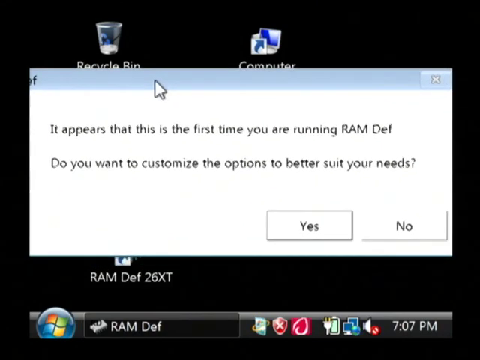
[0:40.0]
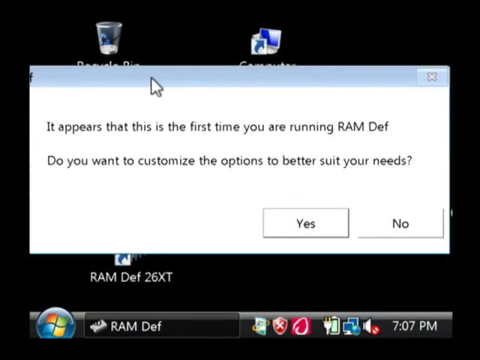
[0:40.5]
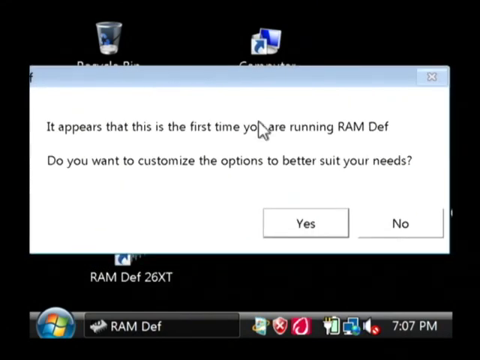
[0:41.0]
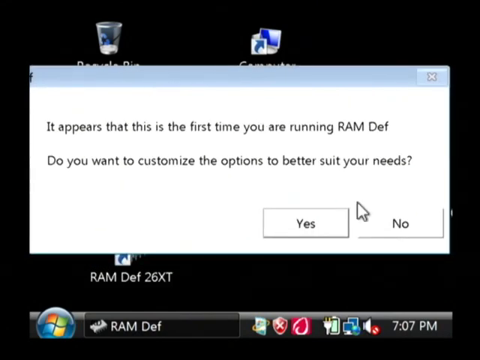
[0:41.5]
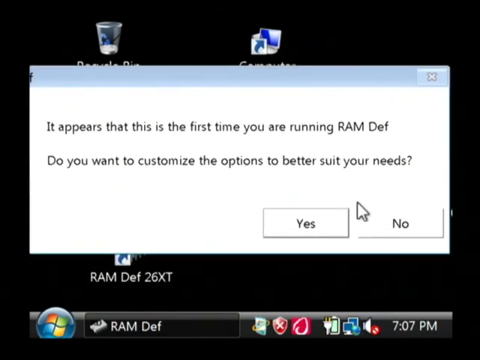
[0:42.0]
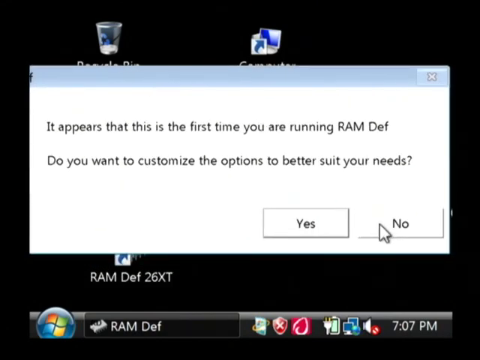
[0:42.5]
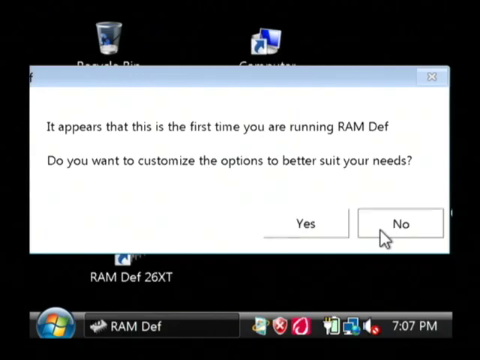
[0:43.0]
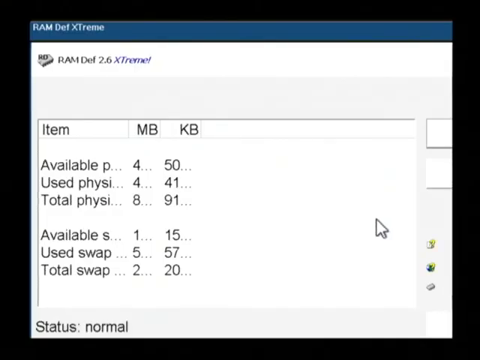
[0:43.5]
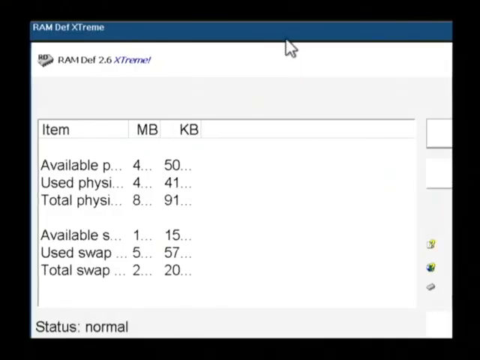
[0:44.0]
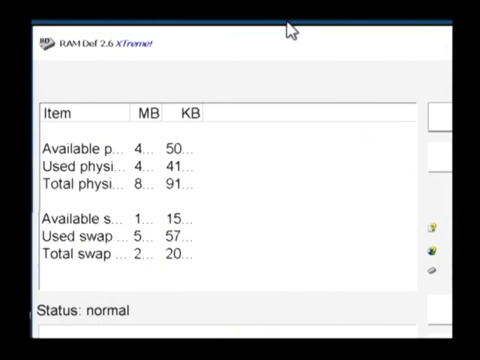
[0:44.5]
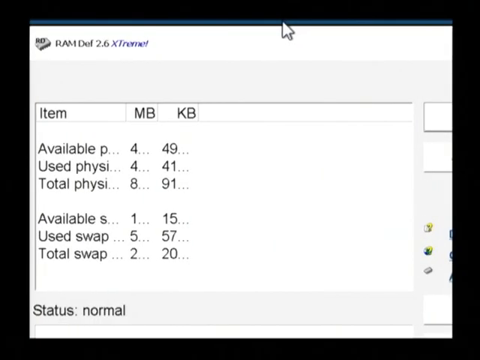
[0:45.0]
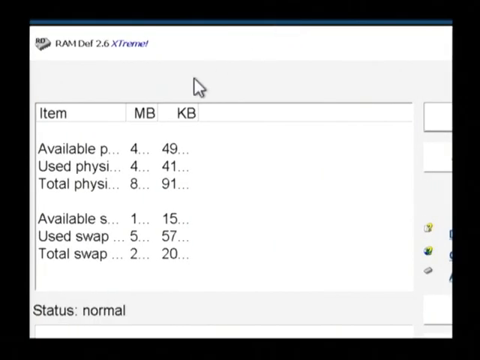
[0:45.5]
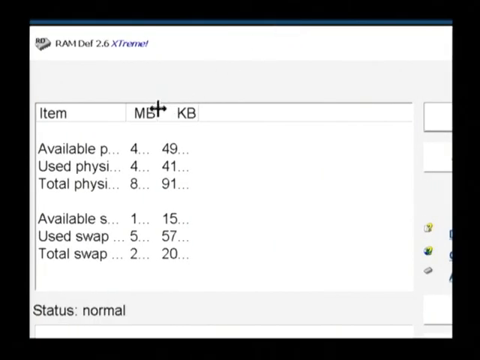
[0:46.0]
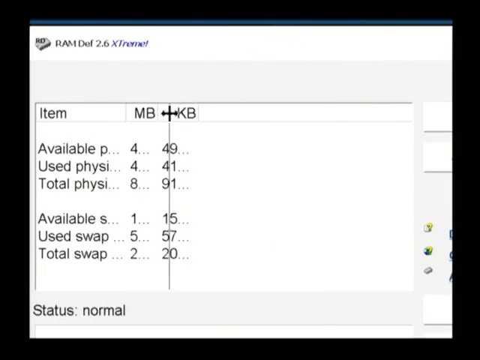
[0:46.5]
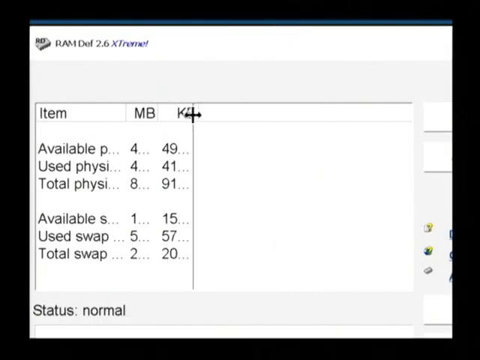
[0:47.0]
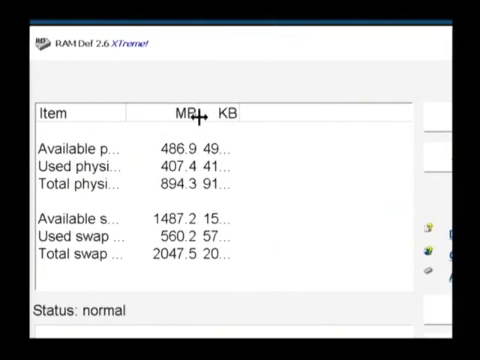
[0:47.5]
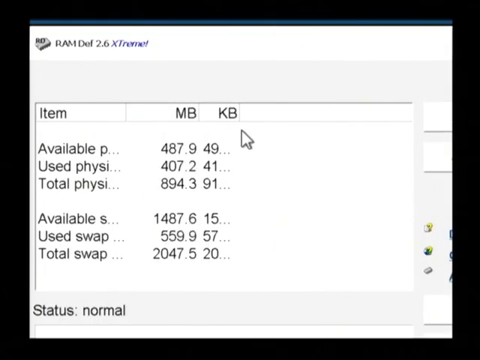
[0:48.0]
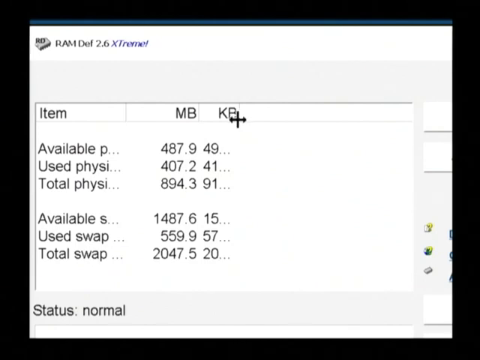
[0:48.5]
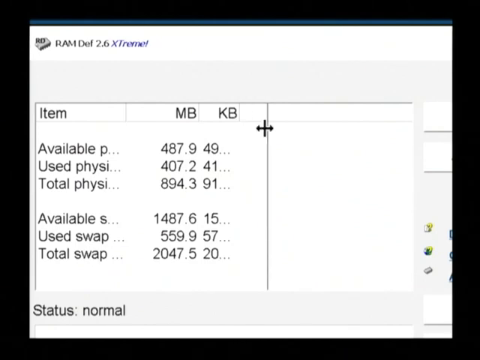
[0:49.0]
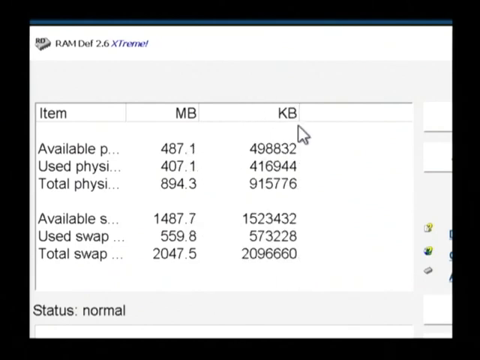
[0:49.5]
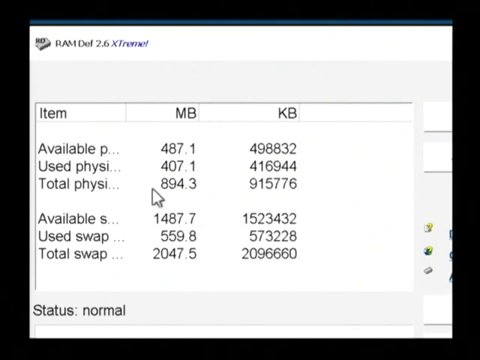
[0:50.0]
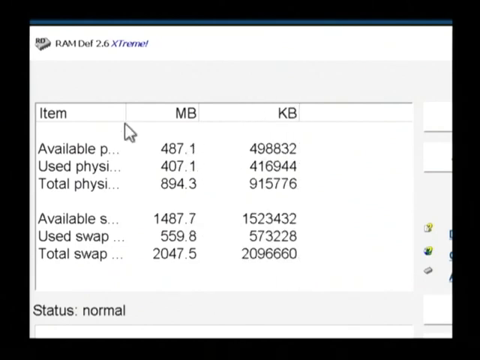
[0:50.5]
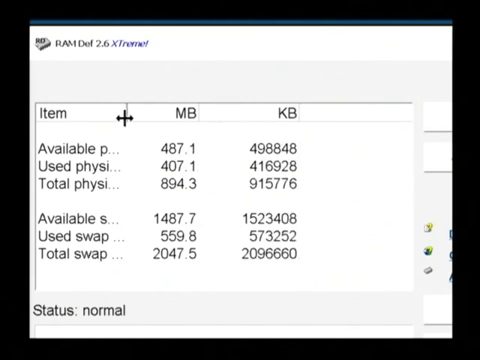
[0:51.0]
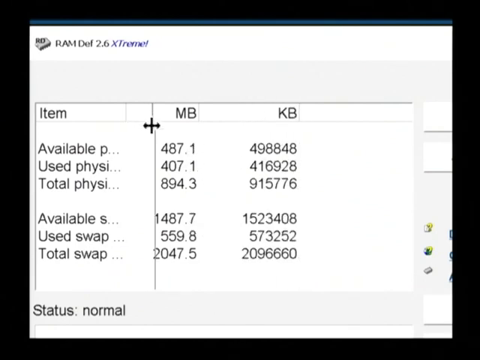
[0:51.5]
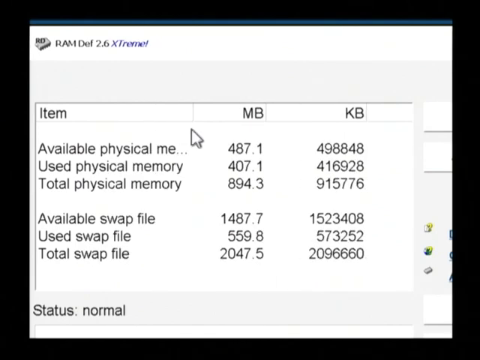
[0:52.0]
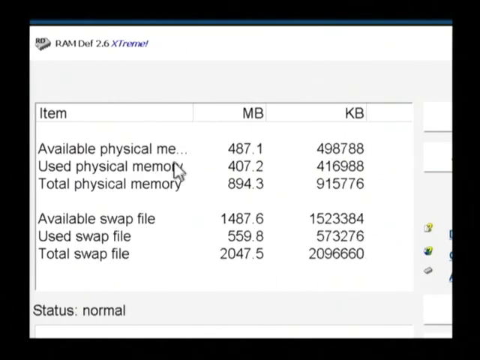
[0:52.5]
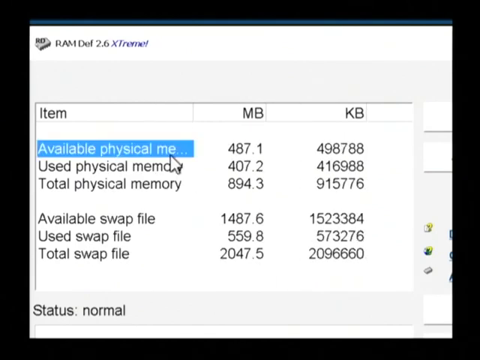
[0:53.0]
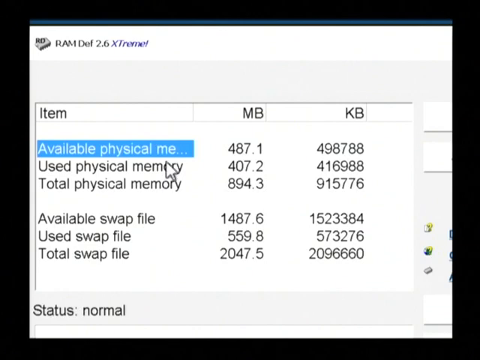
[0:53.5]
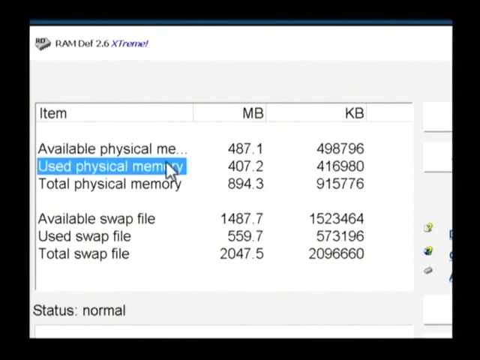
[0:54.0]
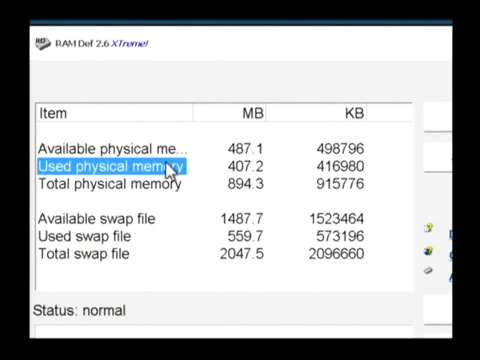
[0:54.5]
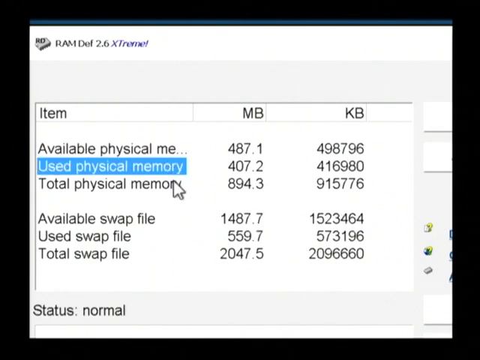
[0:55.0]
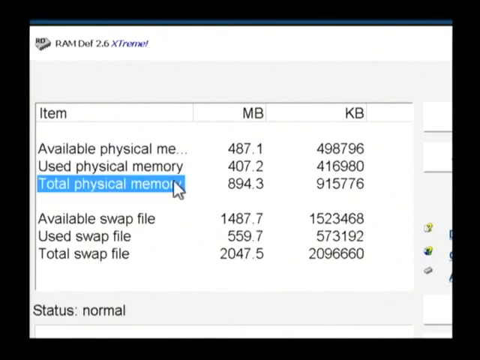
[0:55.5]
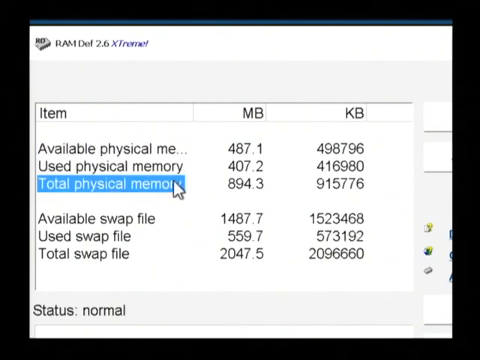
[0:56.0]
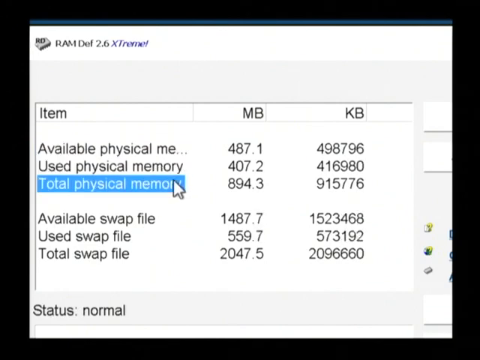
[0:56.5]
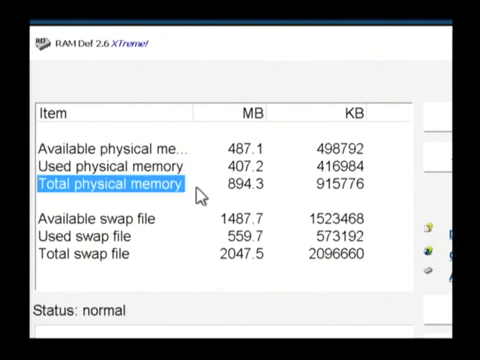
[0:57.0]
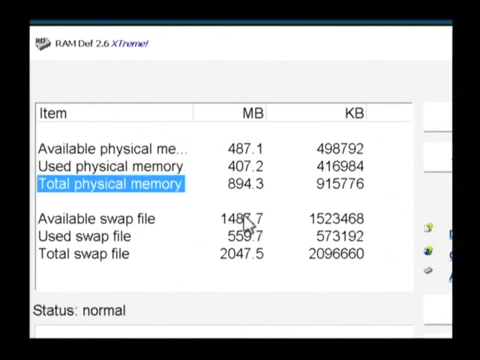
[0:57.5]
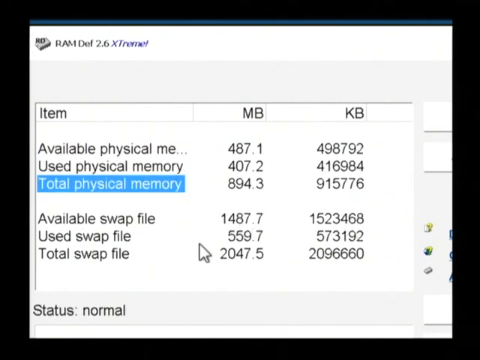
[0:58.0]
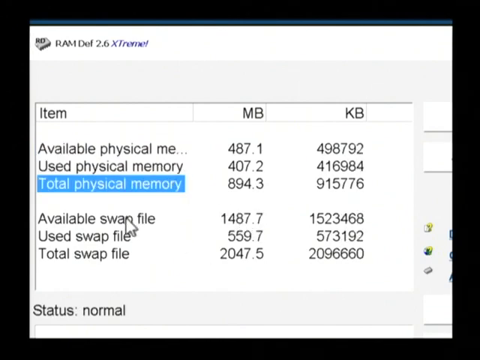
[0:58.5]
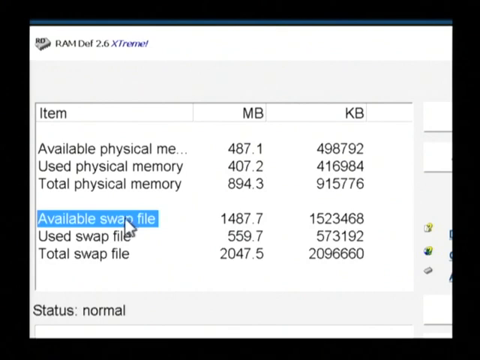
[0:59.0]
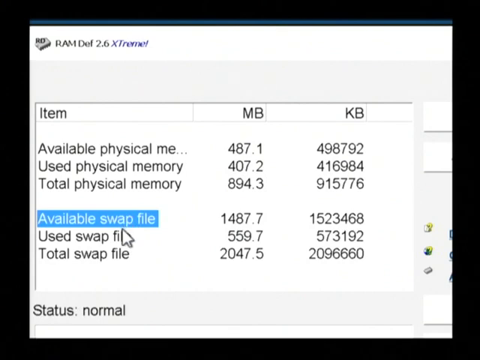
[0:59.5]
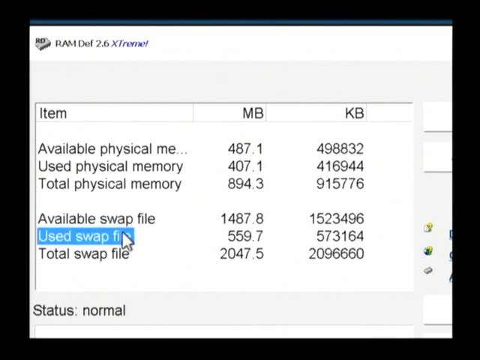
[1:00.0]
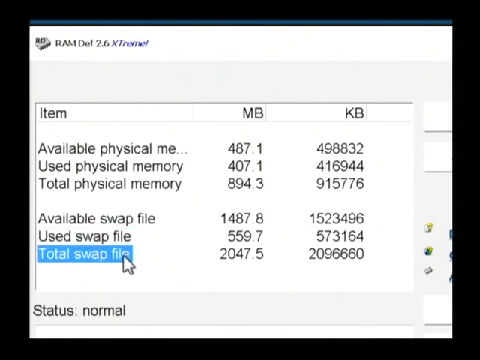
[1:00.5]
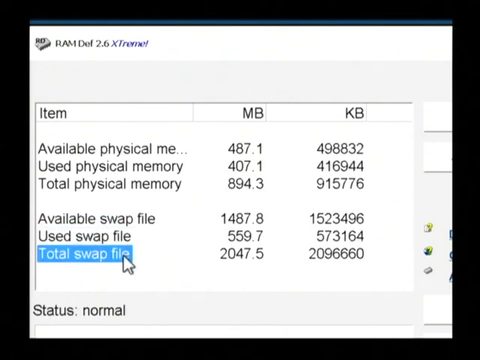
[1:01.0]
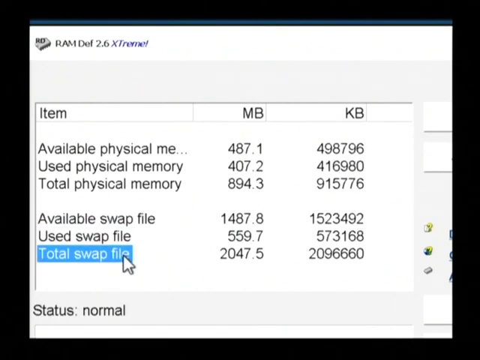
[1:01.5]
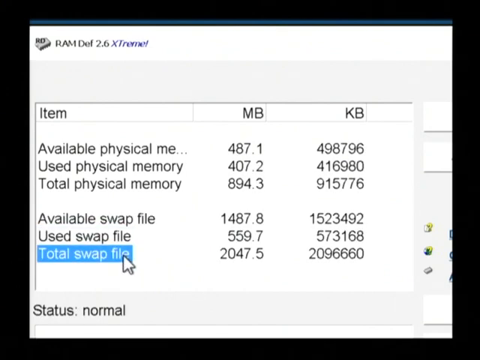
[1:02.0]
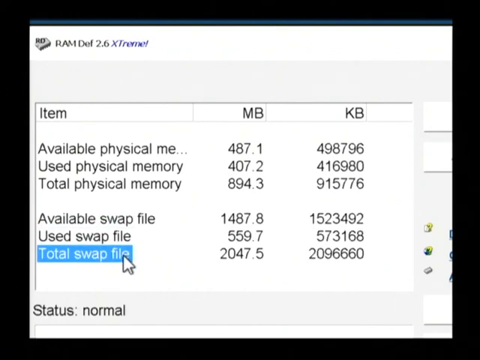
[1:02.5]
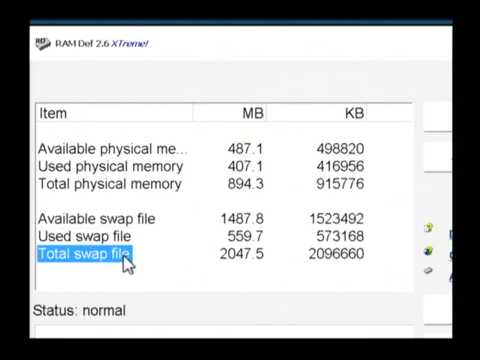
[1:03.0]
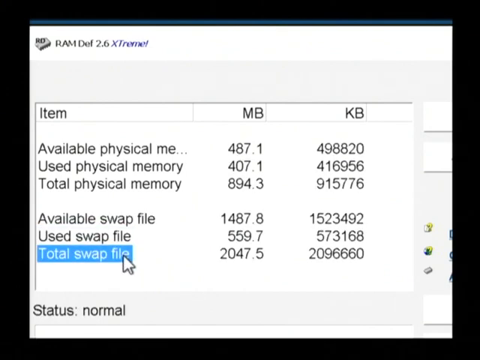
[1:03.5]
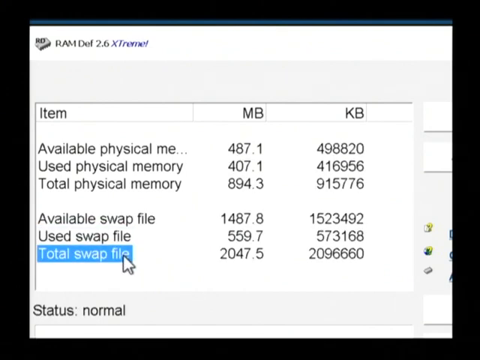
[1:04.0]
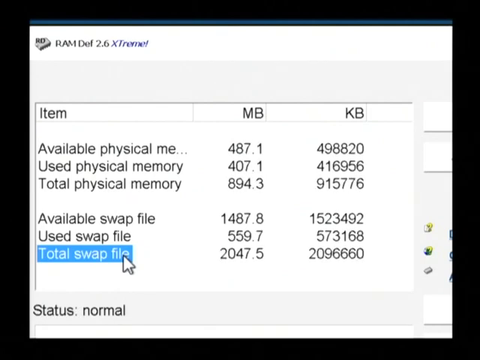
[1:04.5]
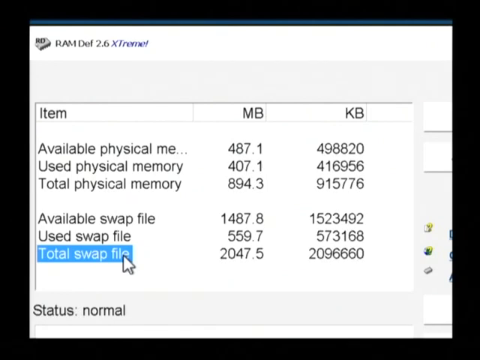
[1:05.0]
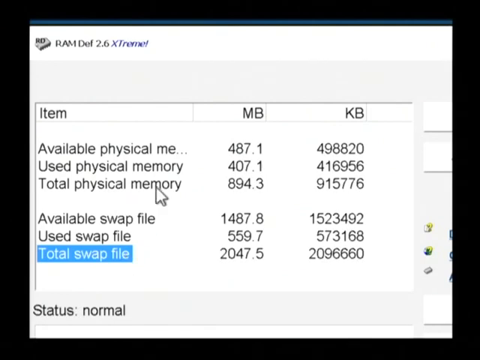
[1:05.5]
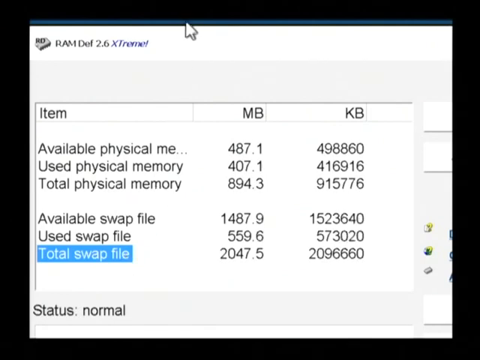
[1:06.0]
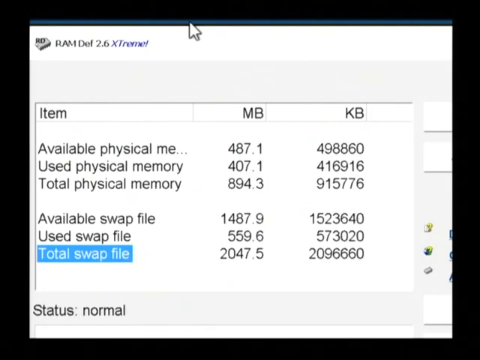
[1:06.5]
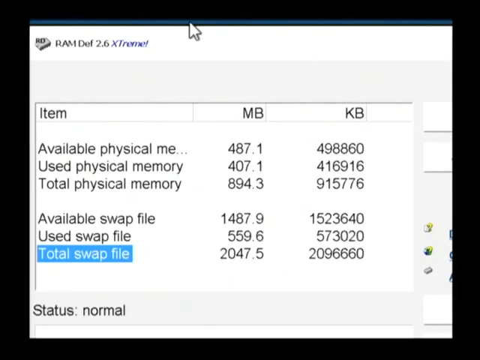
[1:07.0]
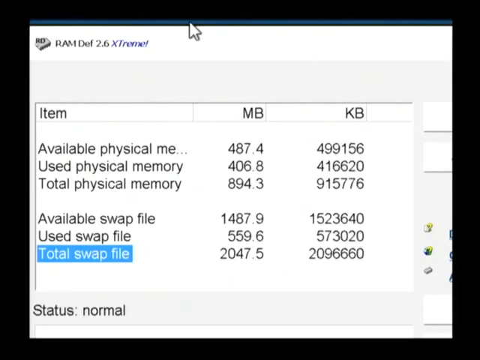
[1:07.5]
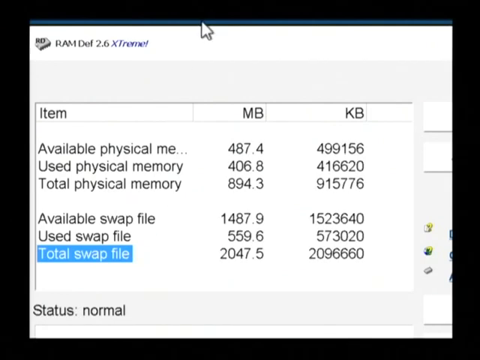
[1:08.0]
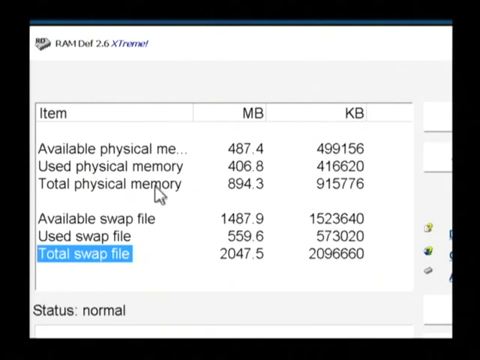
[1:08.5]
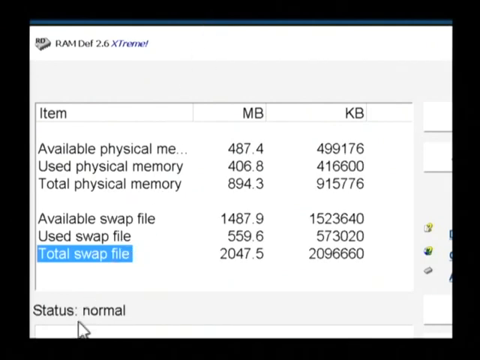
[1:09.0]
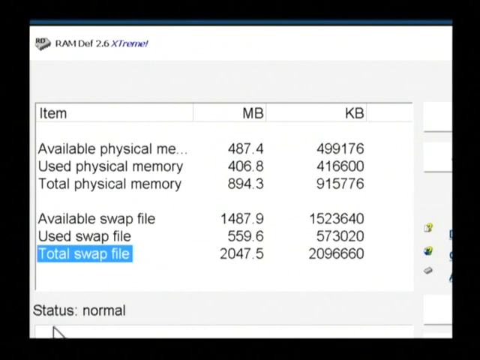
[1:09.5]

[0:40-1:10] After he opens ramdev26xt, a message reads "it appears that this is the first time you are running a ram dev Do you want to customize the options to better suit your needs?" He selects No. The app then shows "ramdev2.6xt", listing items with their megabytes and KBs: available physical memory with a summary, used physical memory, total physical memory, available swap files and total swap files, each with MBs and KBs. The app appears to be recording the storage being used, and it shows the used spaces with their MBs and KBs.